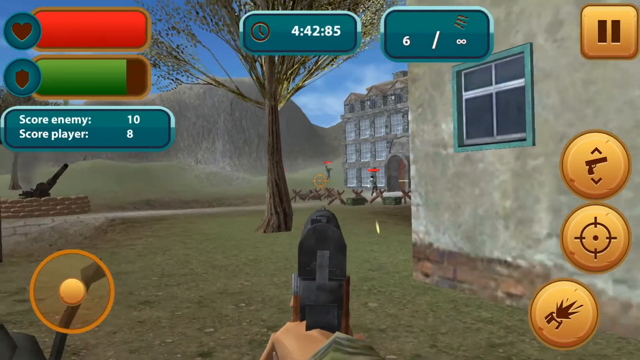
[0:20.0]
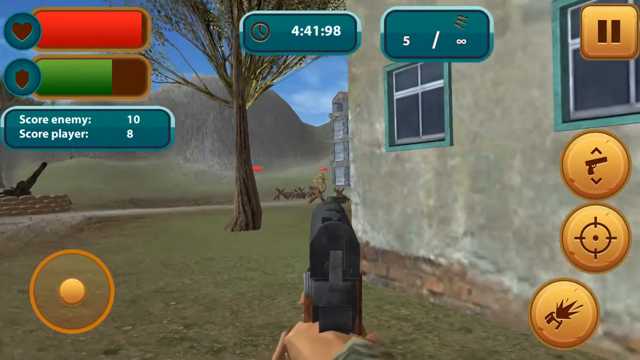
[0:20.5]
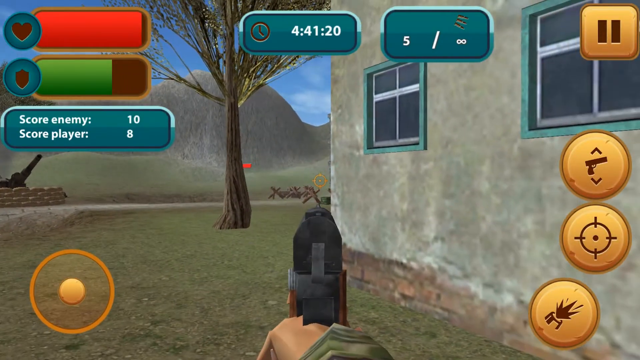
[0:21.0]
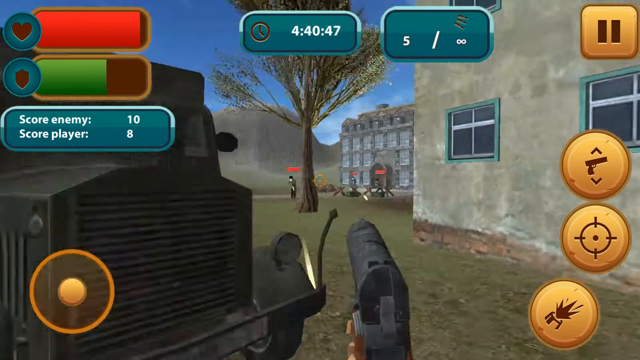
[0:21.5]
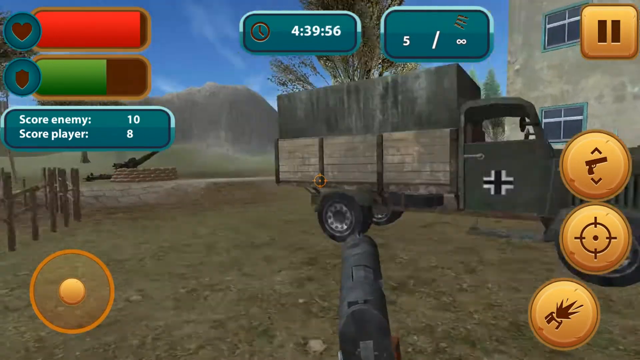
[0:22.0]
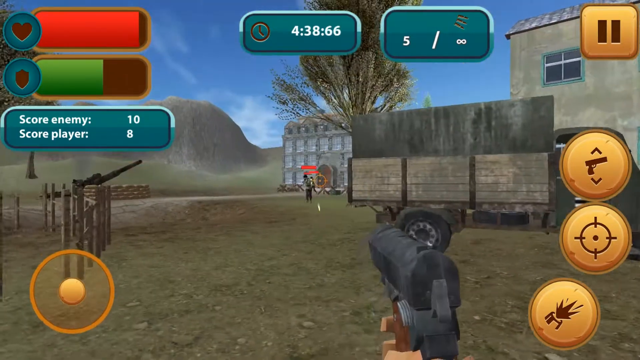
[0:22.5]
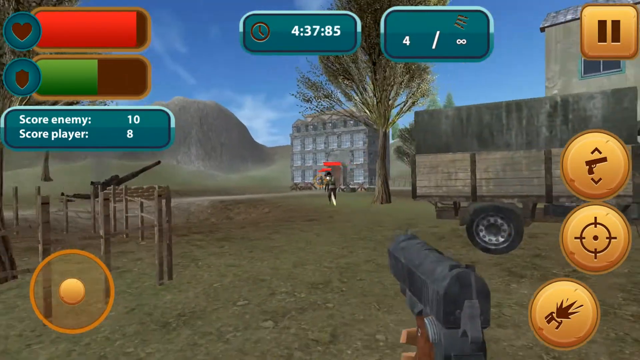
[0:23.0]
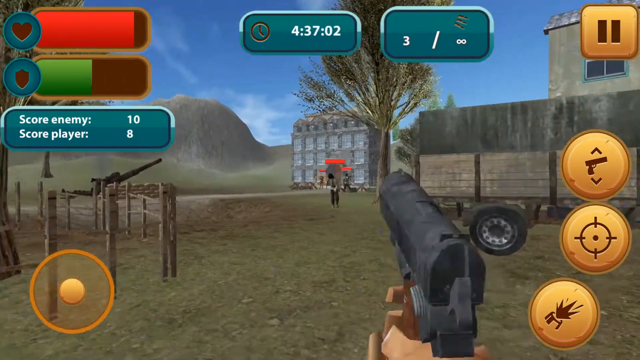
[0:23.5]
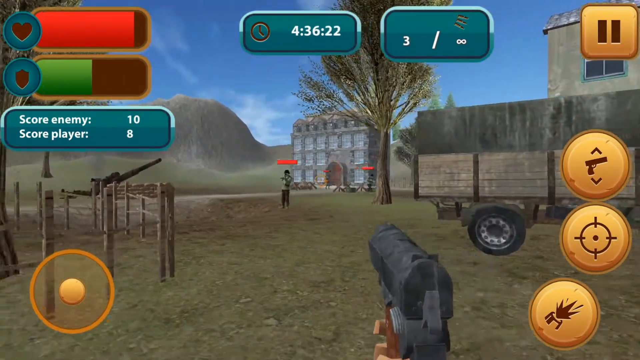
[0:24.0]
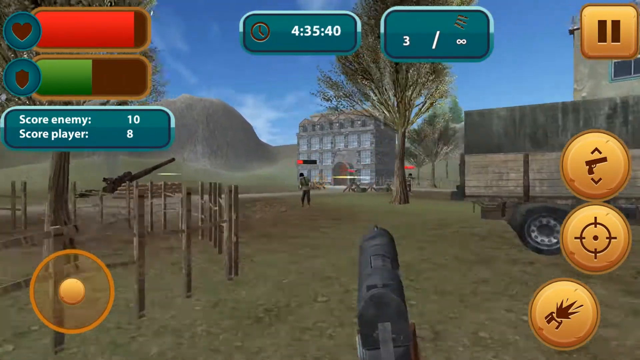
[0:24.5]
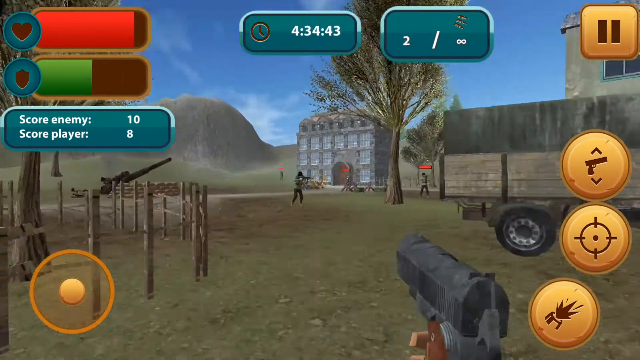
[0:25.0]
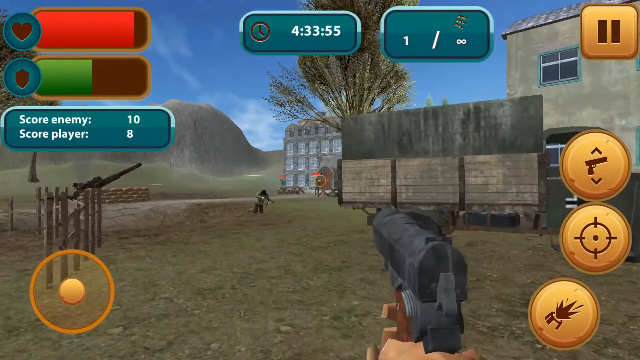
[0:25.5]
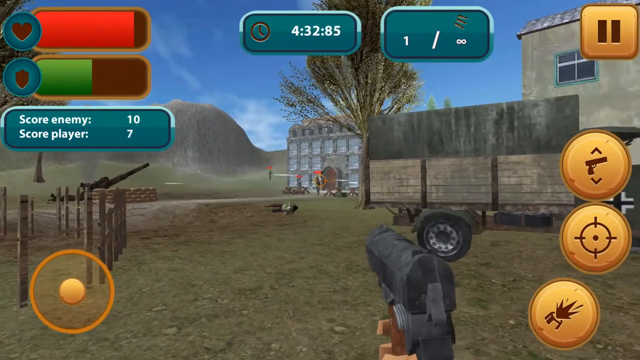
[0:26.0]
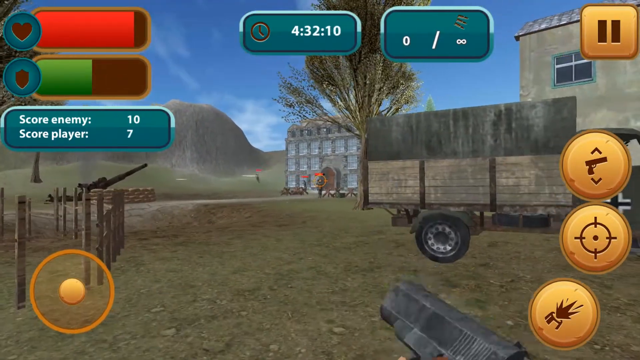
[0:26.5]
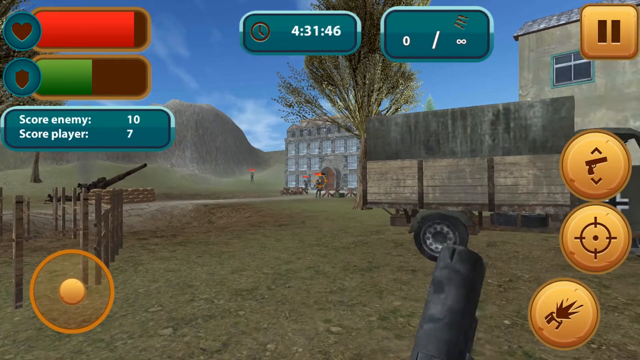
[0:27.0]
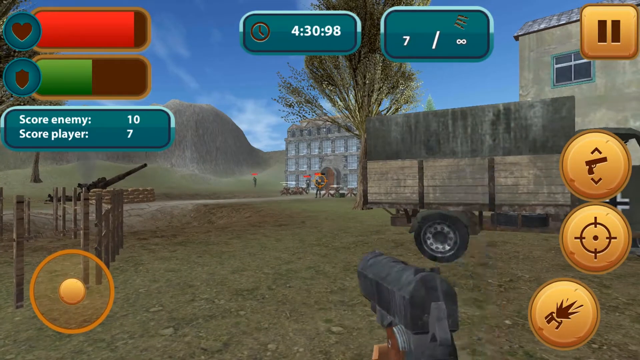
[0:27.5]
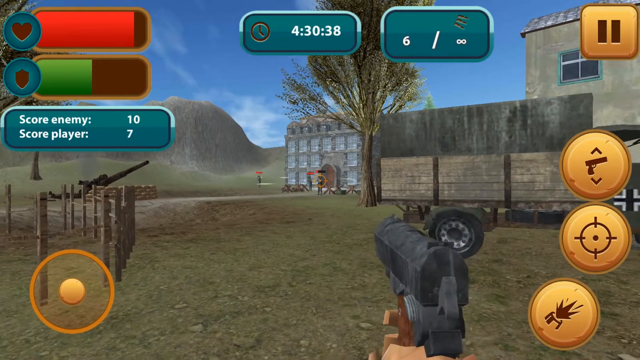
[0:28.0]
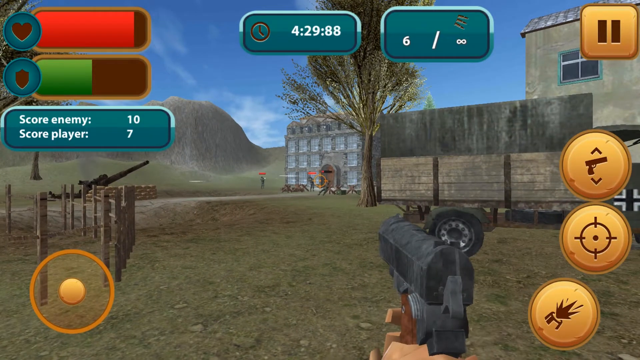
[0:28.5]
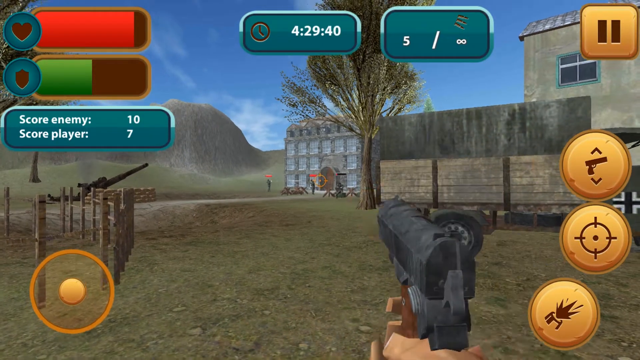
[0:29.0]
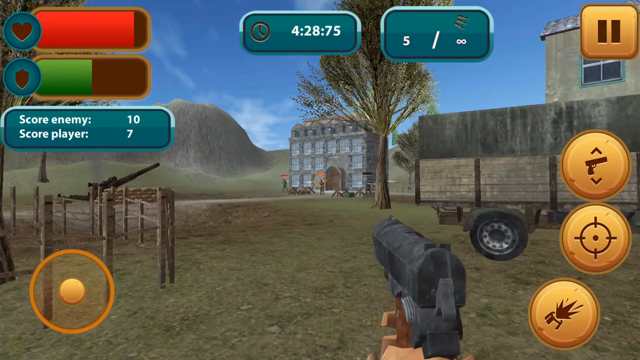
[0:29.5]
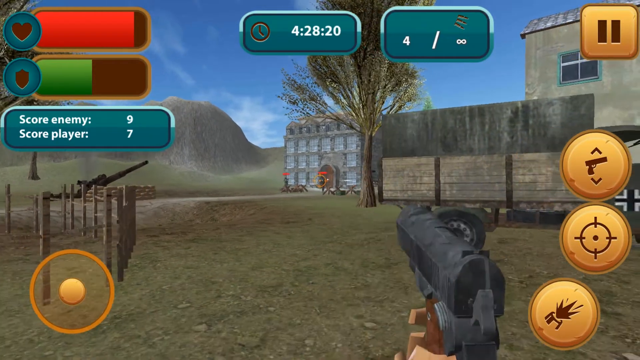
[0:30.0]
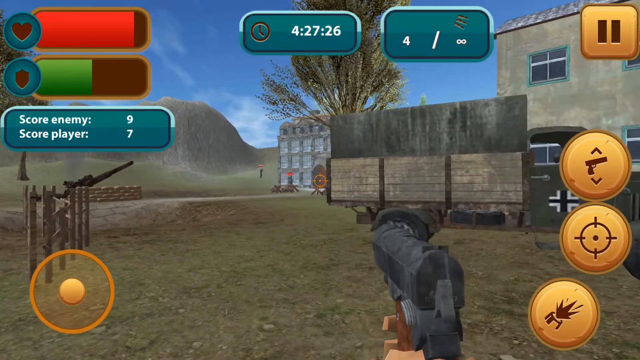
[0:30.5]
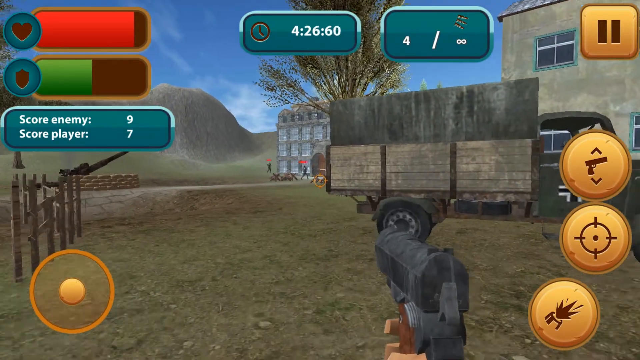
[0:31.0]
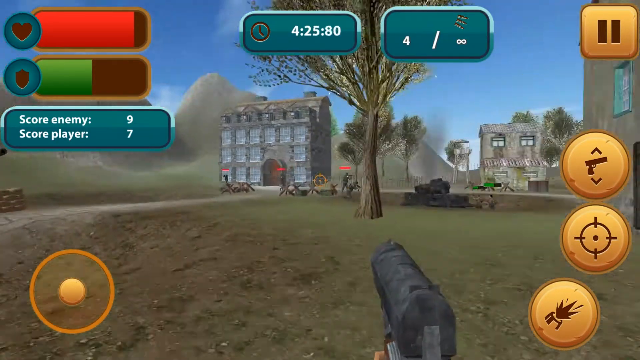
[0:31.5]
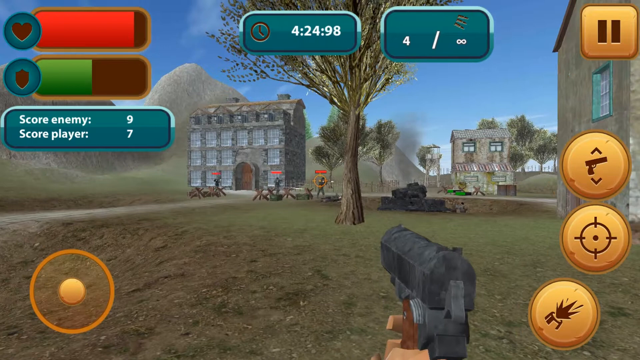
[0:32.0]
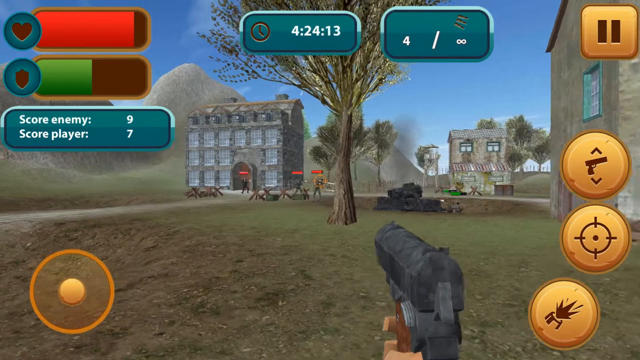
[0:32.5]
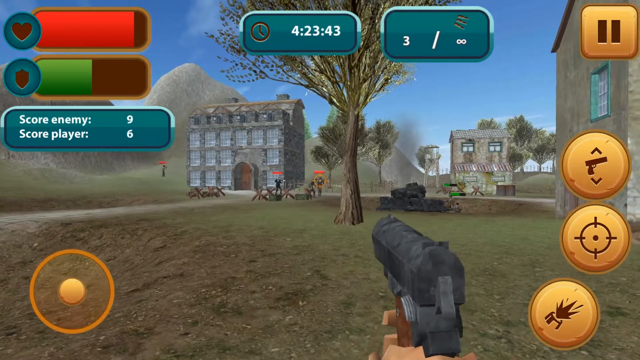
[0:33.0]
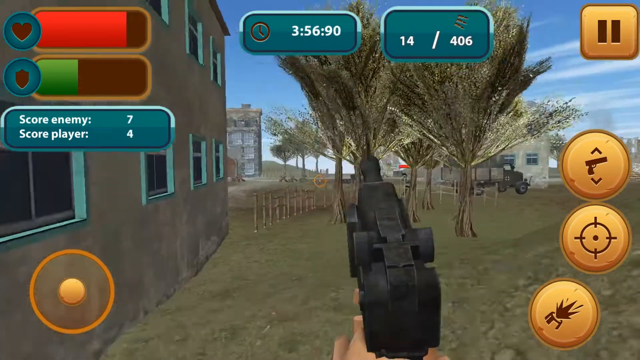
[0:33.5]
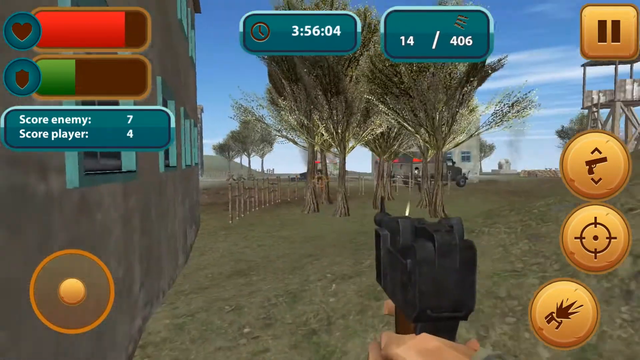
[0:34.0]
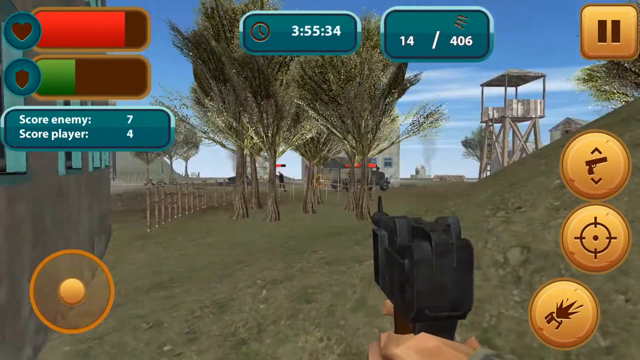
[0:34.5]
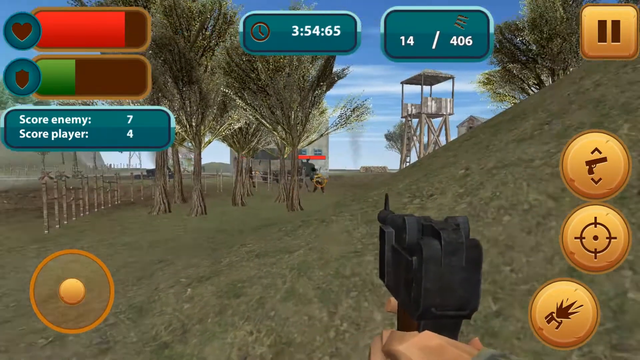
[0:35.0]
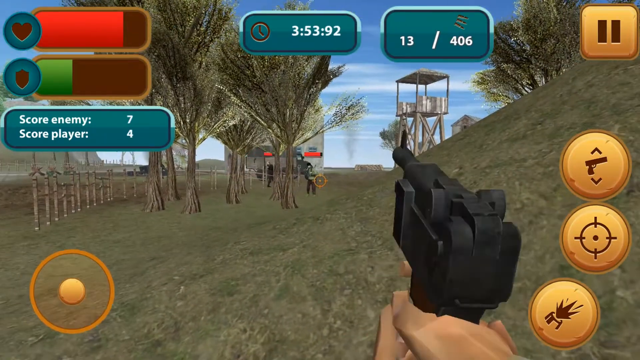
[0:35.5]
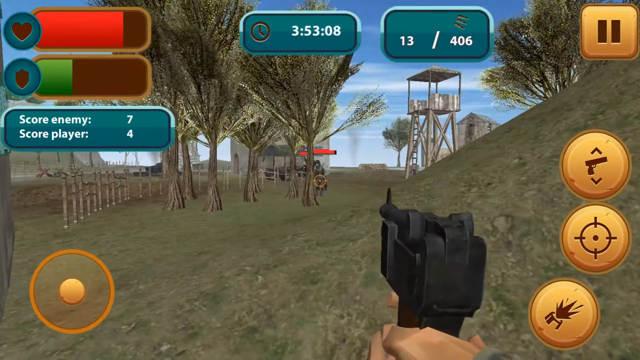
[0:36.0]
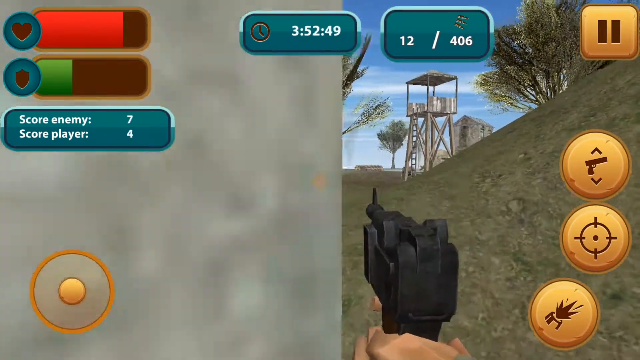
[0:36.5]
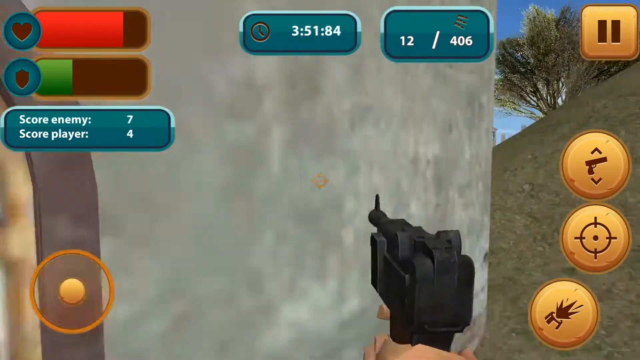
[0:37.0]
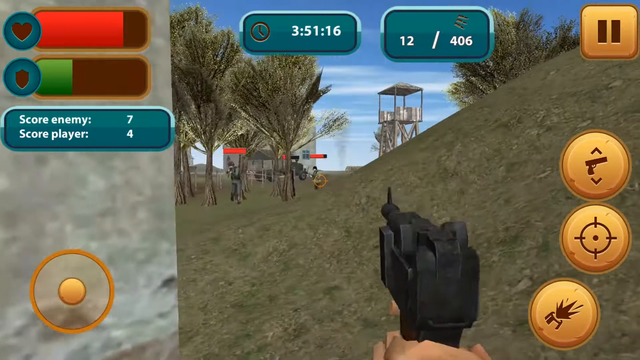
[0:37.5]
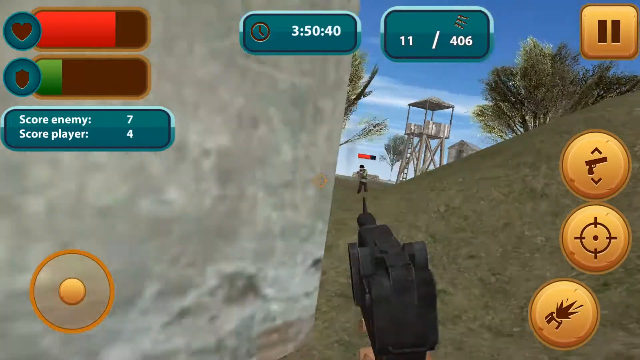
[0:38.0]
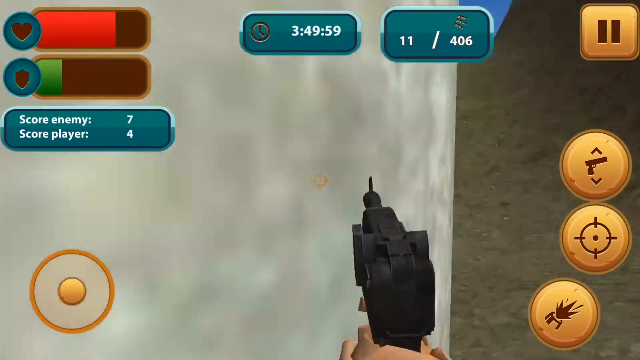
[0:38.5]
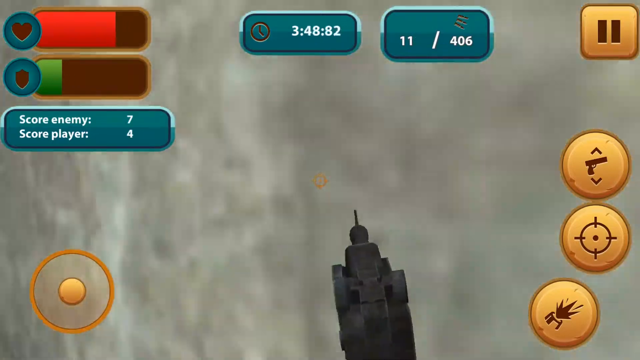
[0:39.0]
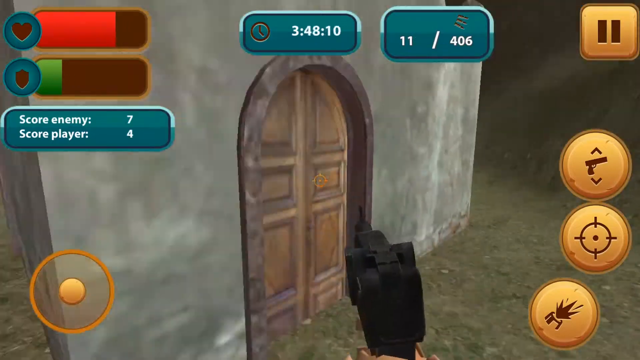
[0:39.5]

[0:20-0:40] The World War II-based game continues. A sort of Nazi German cargo vehicle is visible. The characters hold many guns, such as the German Luger and the 1911. The health bar and sort of shield features are on screen, along with a kind of individual player leaderboard, a time limit, the amount of ammo left in the weapon and a pause function. There is a switch-weapon feature, a crosshair, most likely an aim-in function, and a fire button to shoot the gun. A small movement dial is in the bottom left corner. At the start, there appears to be an artillery gun.